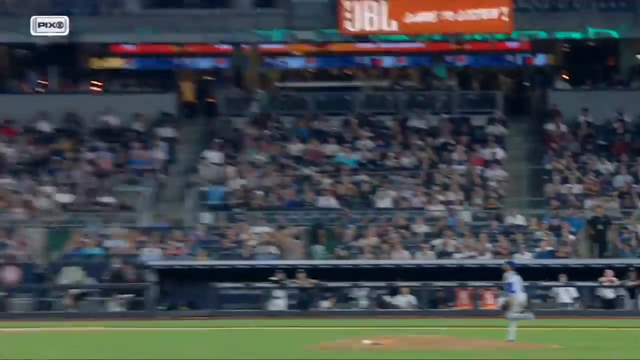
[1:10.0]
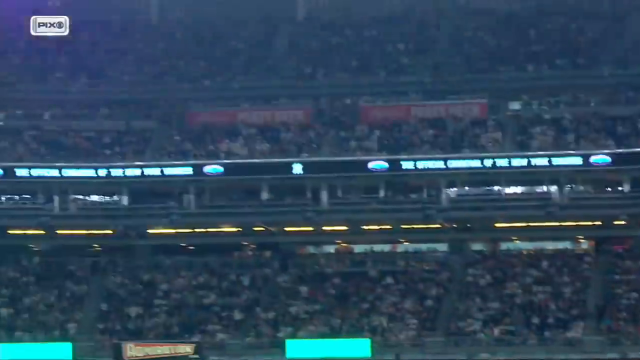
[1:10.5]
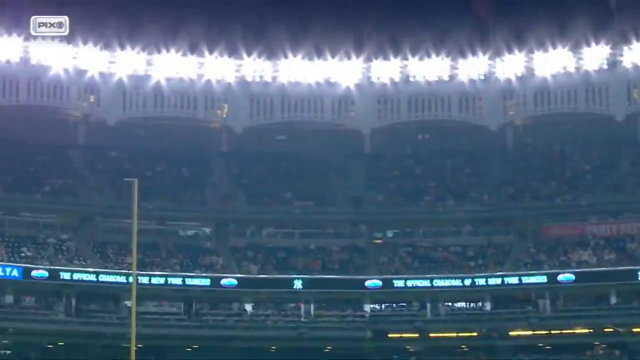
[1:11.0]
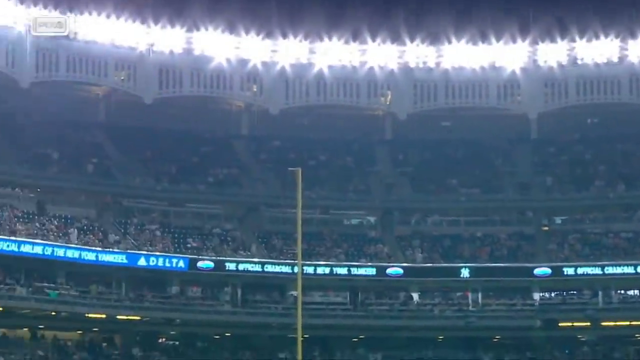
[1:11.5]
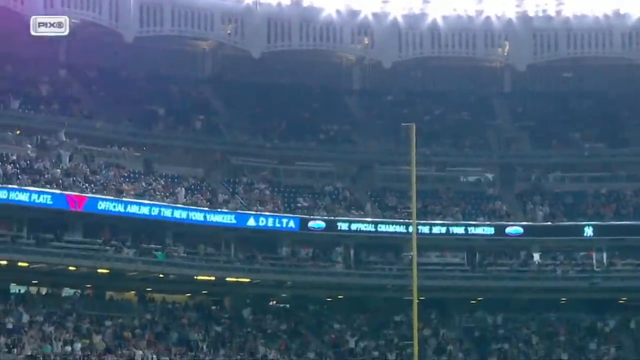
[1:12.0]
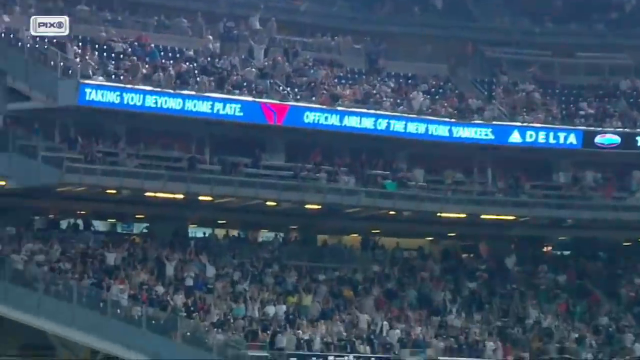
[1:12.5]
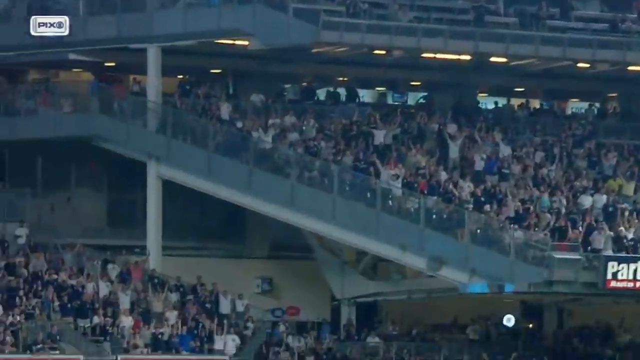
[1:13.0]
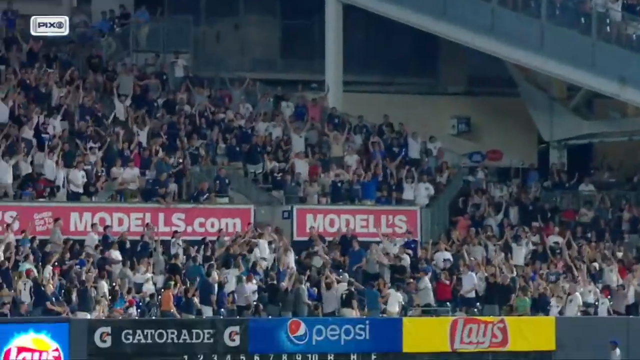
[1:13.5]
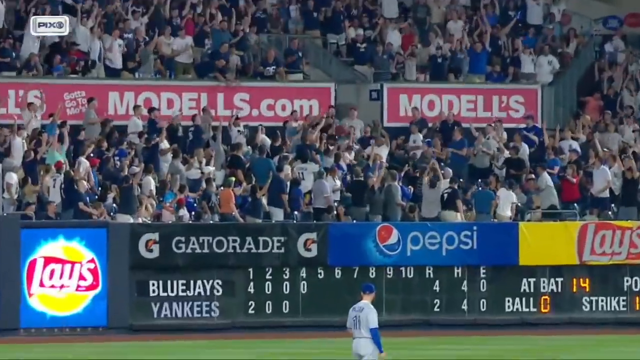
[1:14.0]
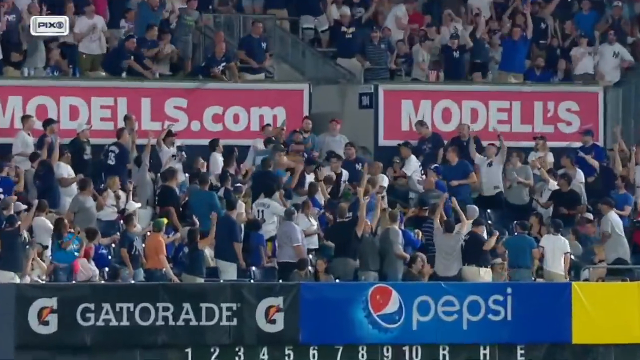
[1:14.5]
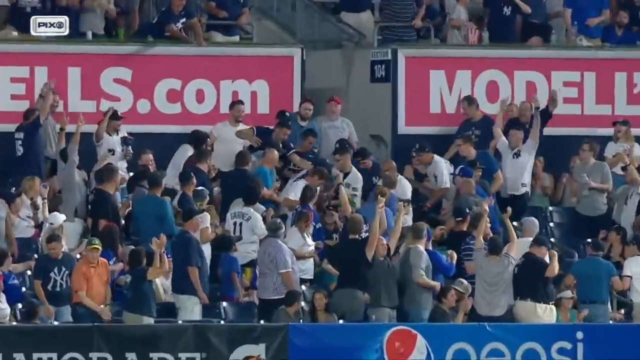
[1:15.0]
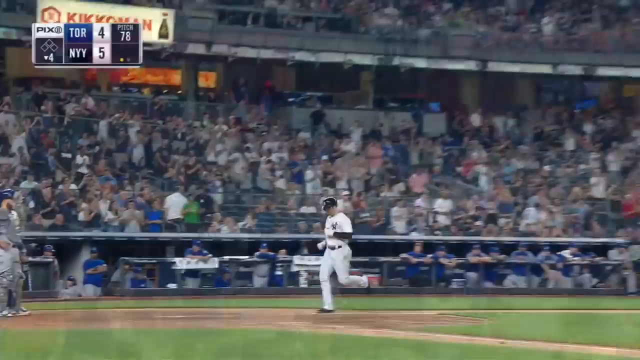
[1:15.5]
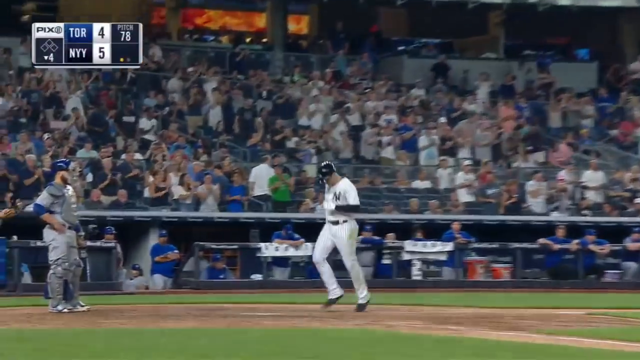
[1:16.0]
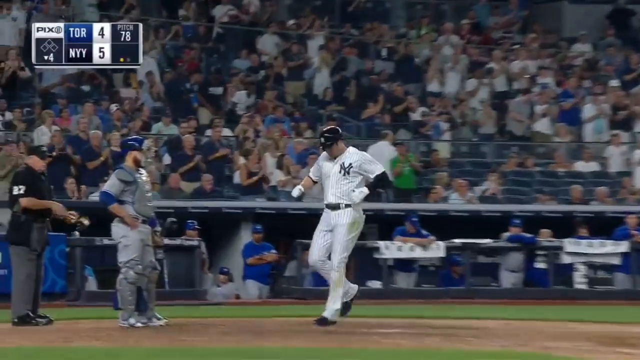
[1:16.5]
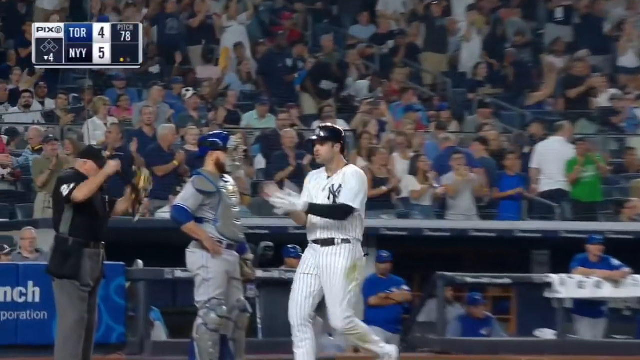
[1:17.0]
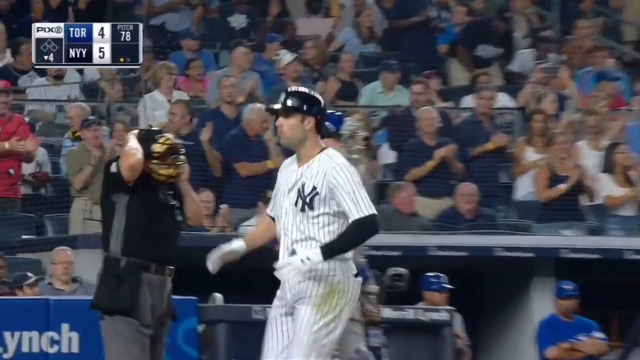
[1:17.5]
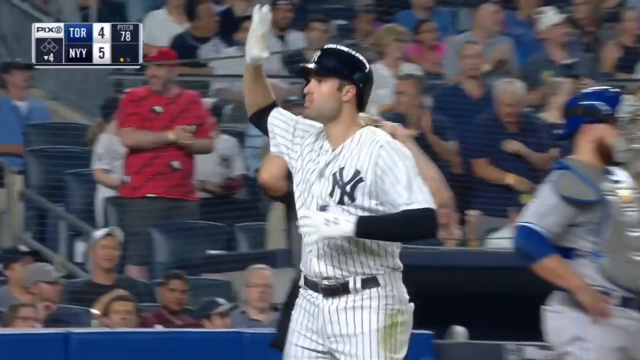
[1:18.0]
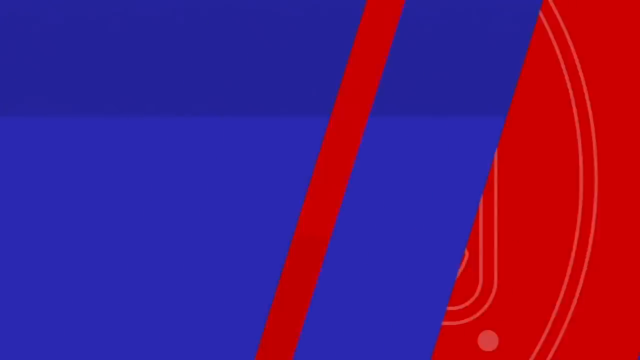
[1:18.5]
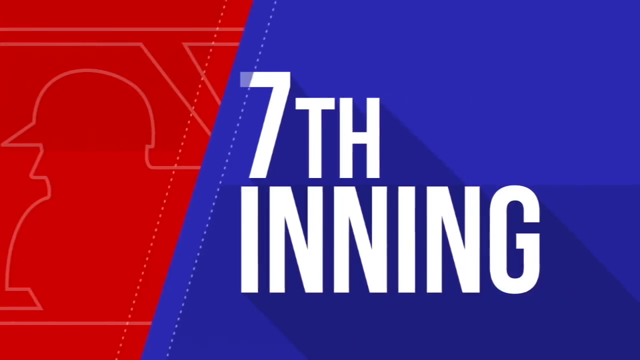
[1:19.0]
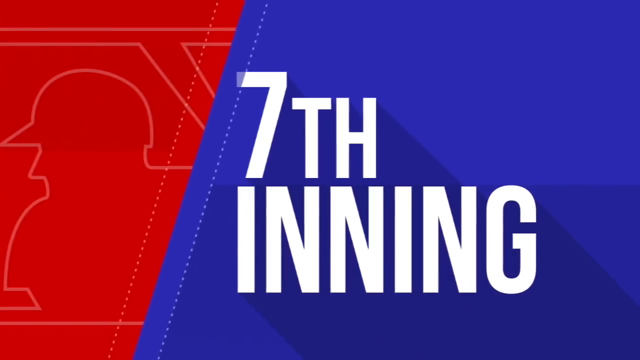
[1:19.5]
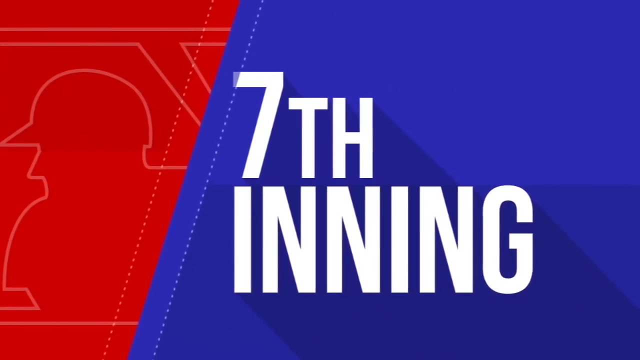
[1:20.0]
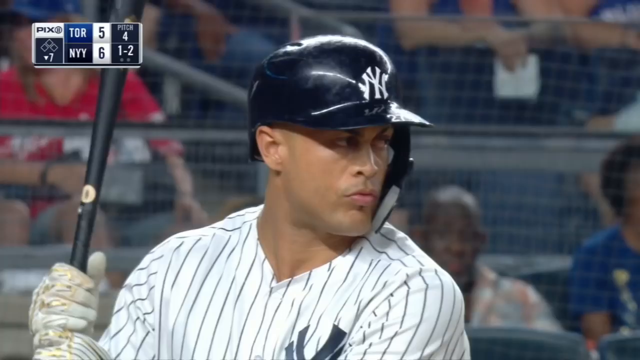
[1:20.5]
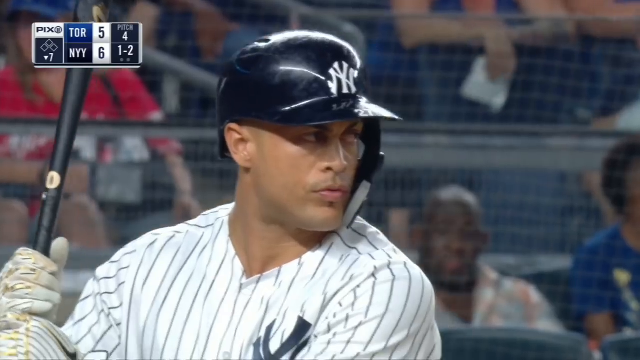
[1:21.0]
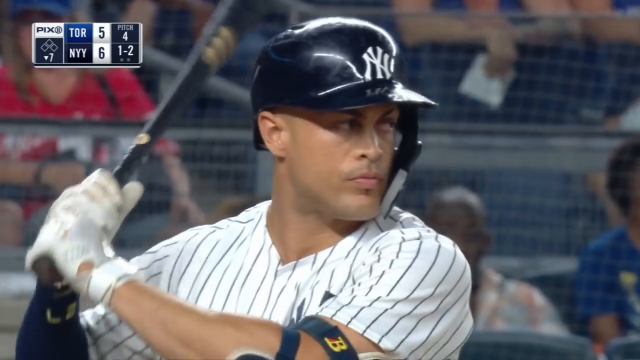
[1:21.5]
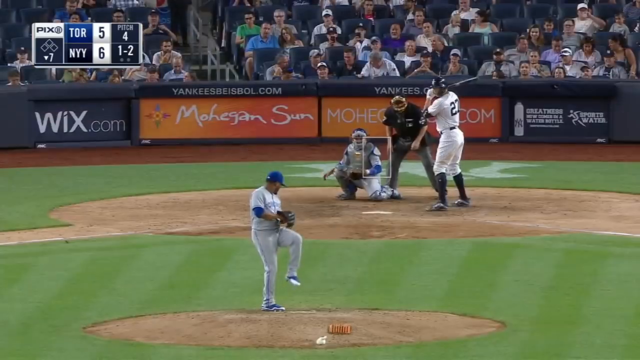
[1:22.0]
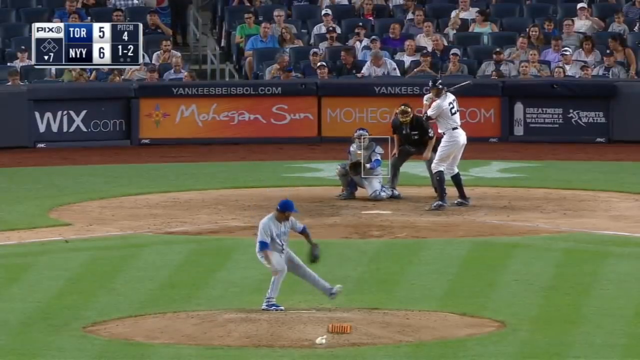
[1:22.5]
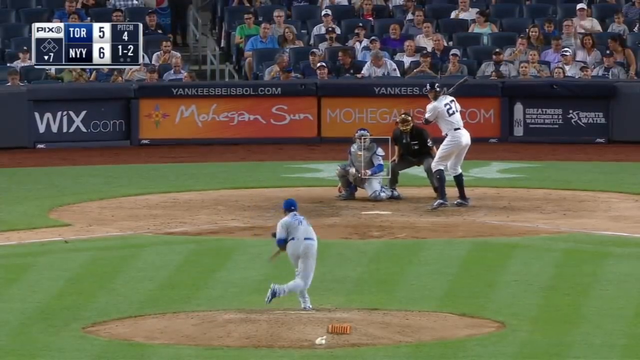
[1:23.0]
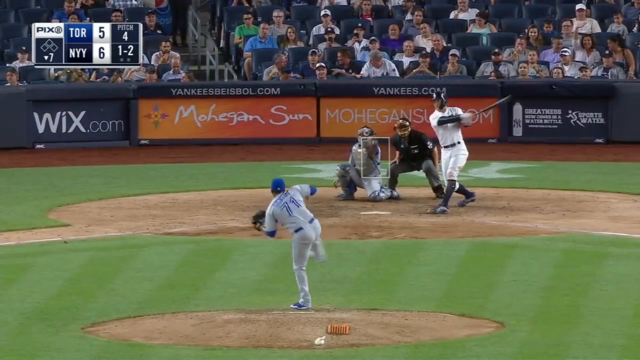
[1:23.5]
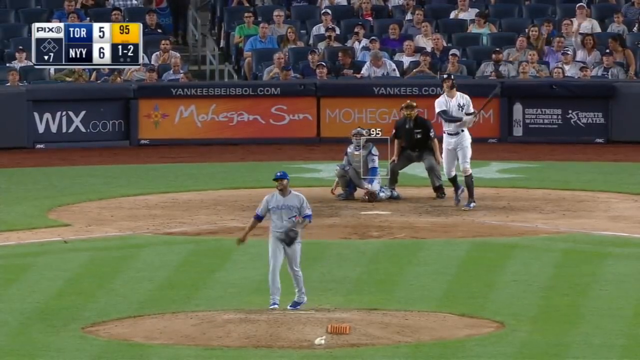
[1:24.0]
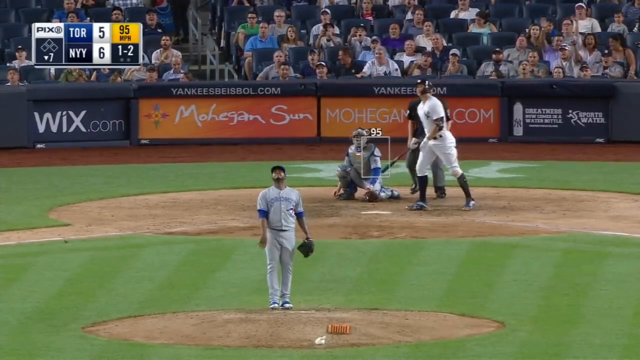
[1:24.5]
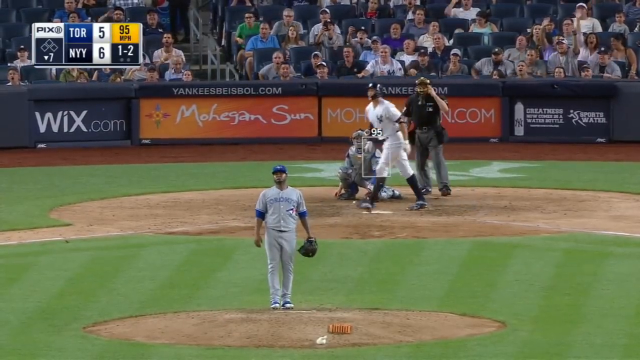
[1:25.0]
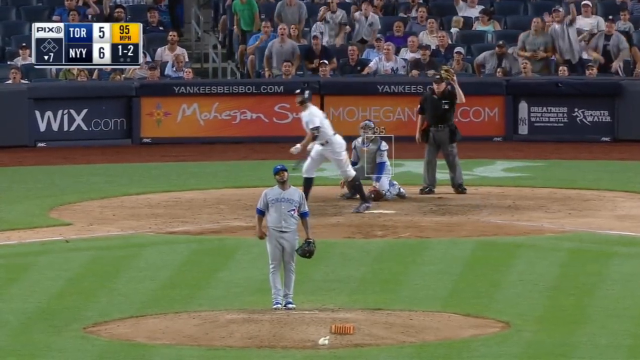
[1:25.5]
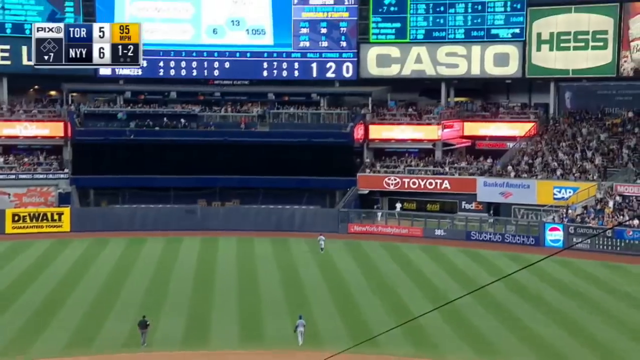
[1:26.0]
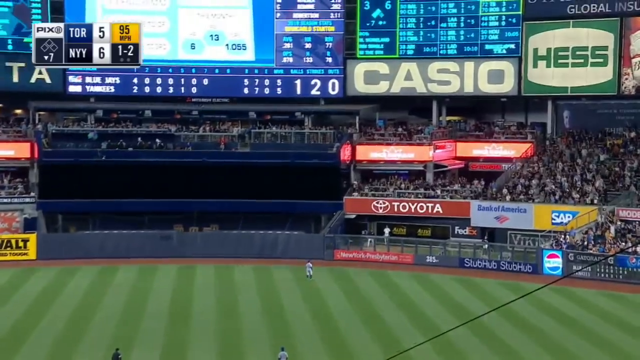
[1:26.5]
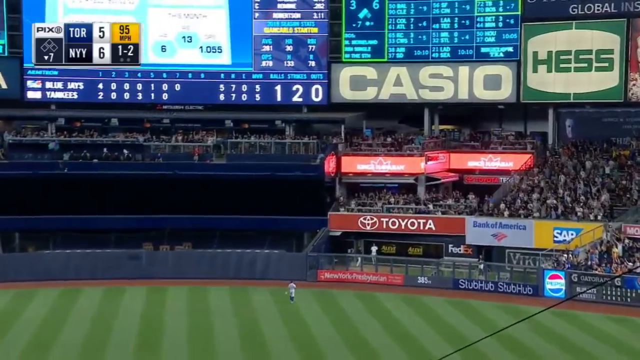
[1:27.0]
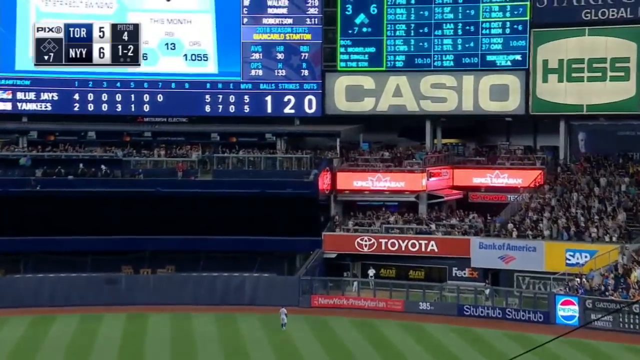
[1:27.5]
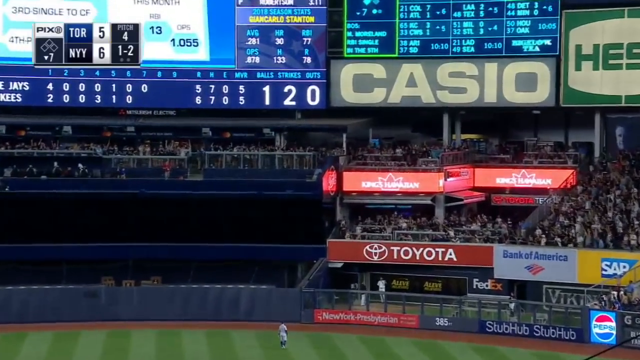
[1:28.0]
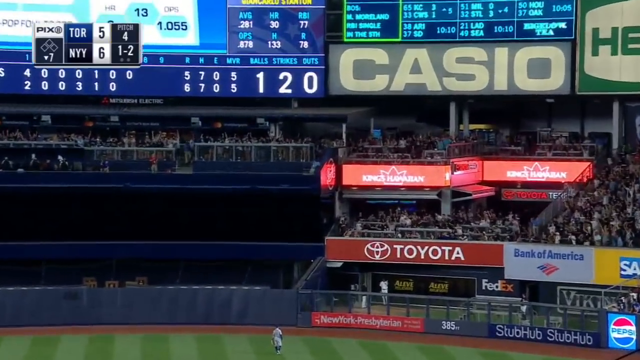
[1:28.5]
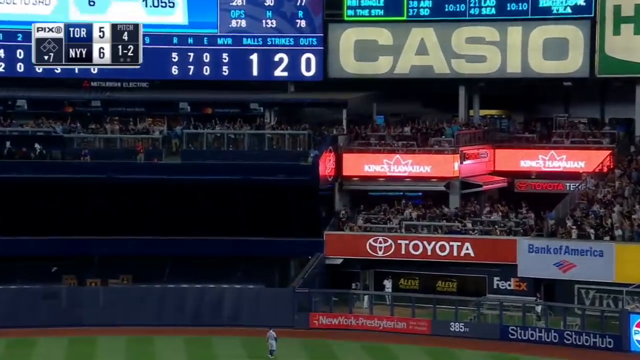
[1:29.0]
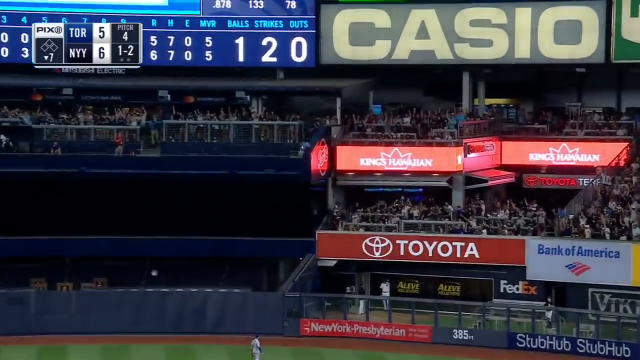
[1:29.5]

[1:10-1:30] A close-up shows the crowd jumping around, cheering and patting each other on the back, especially the man who caught the ball. The batter who struck the ball runs all the way around for a home run. Next, in the seventh inning, a new batter stands with his bat pointing to the left of the screen, the other-handed stance. The pitcher pitches and the ball goes high again, looking like it is going really high, but the shot ends before it is clear where the ball goes. In the background of the stadium is a large, lit-up scoreboard with Casio underneath it and lots of other electronics, and electronic advertisements run around the advertising hoardings at the perimeter of the diamond. The game appears to be between Toronto and the New York Yankees.